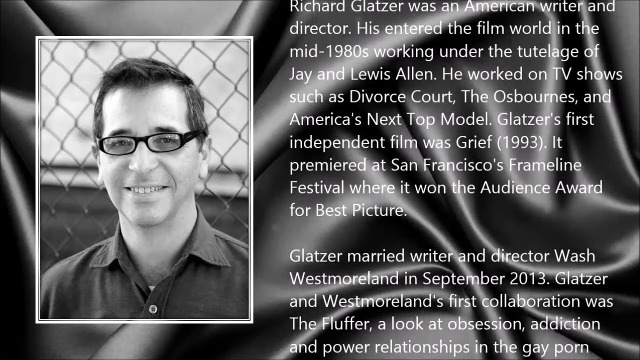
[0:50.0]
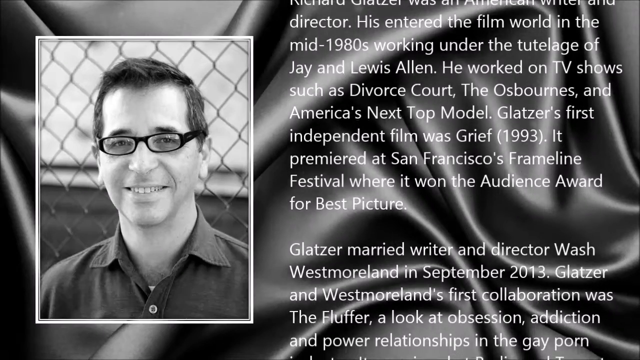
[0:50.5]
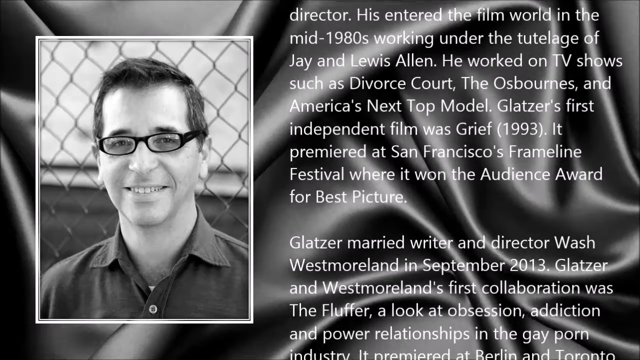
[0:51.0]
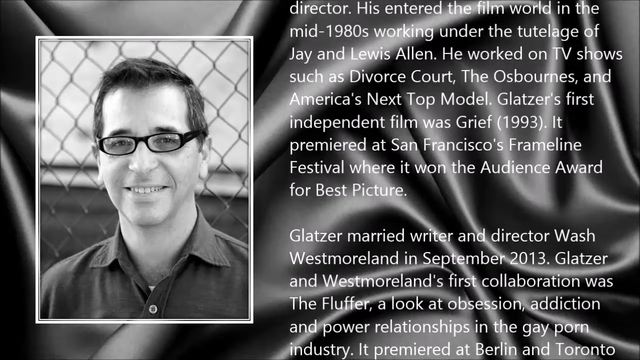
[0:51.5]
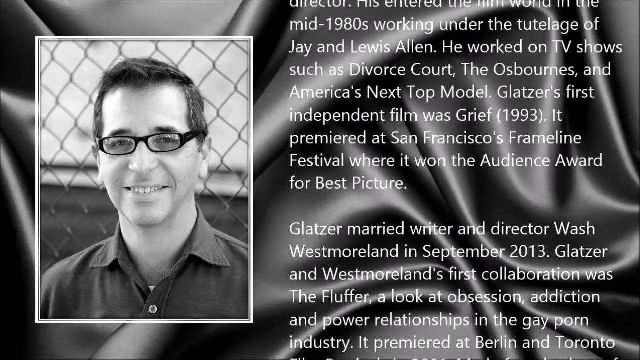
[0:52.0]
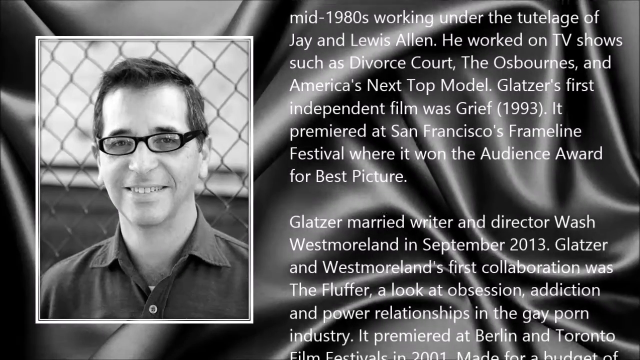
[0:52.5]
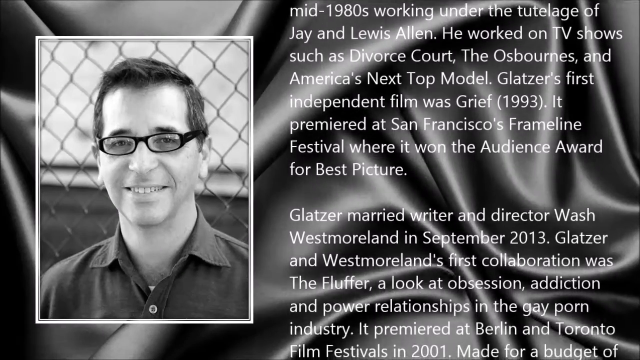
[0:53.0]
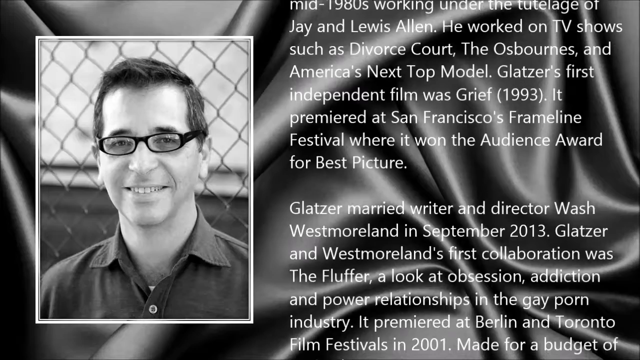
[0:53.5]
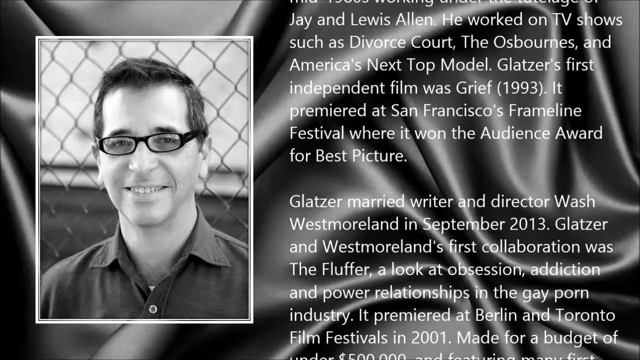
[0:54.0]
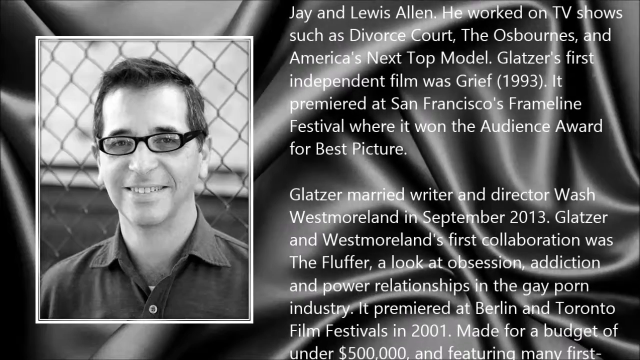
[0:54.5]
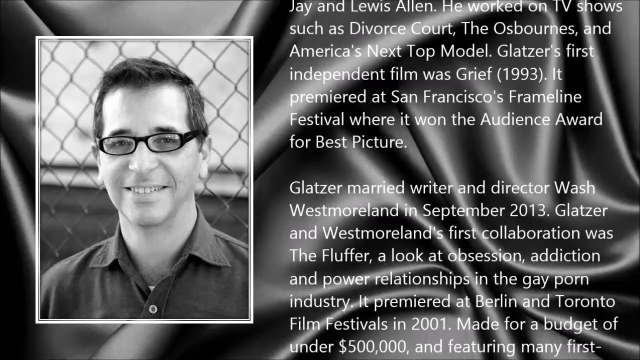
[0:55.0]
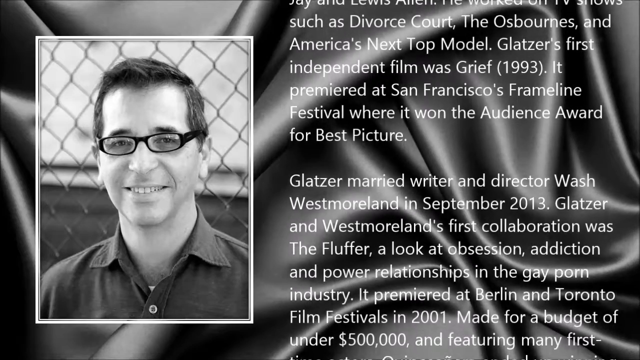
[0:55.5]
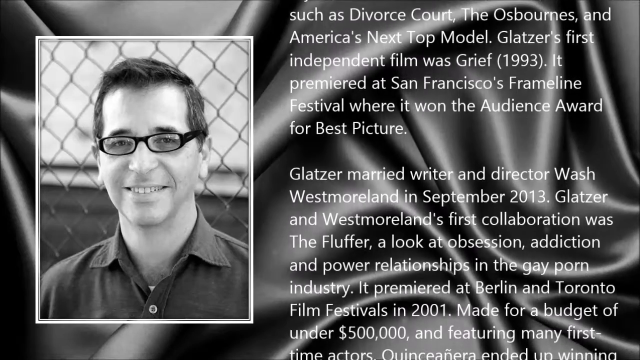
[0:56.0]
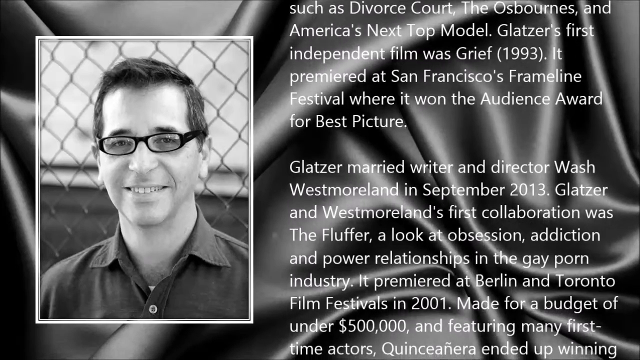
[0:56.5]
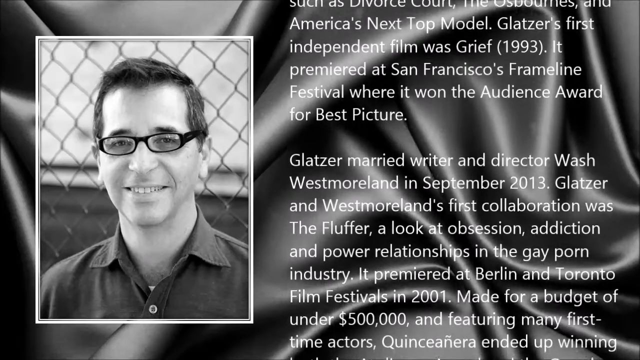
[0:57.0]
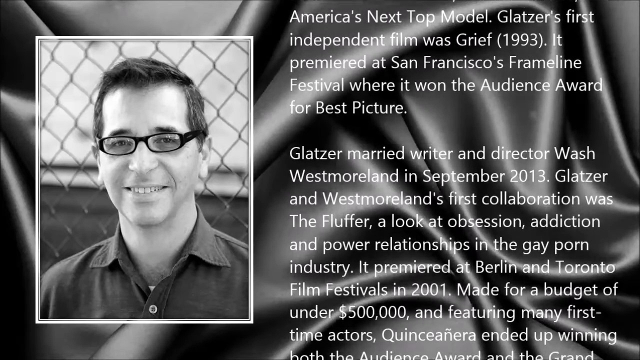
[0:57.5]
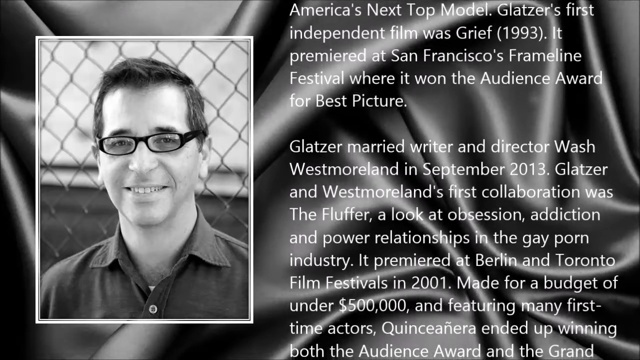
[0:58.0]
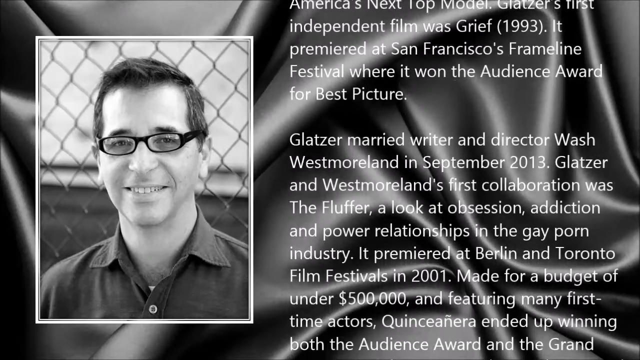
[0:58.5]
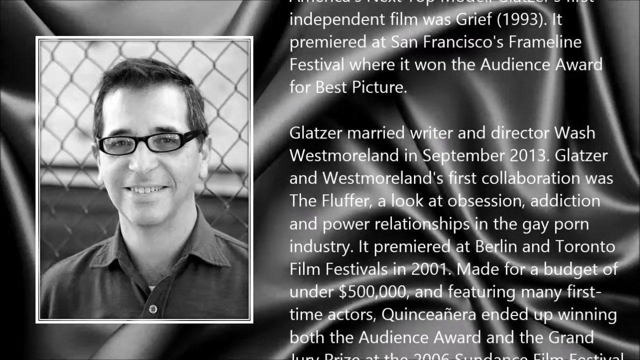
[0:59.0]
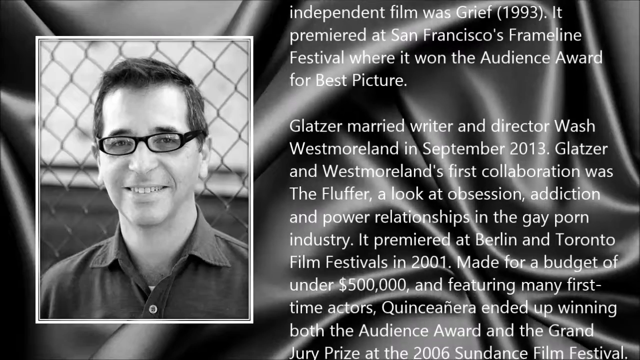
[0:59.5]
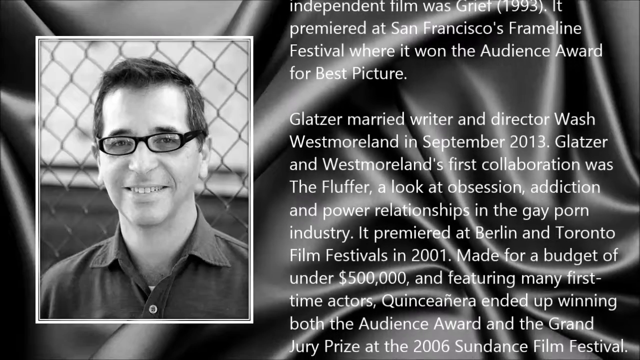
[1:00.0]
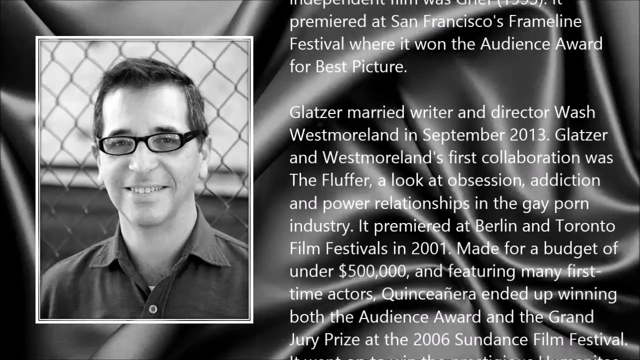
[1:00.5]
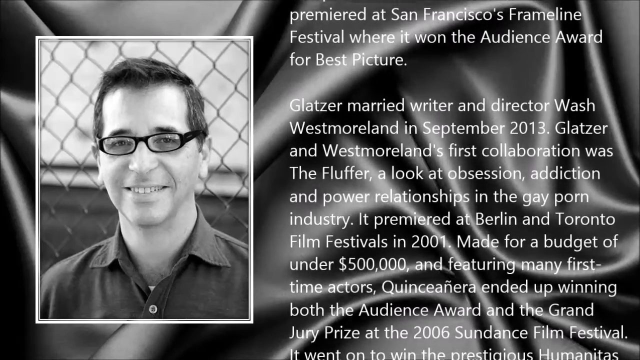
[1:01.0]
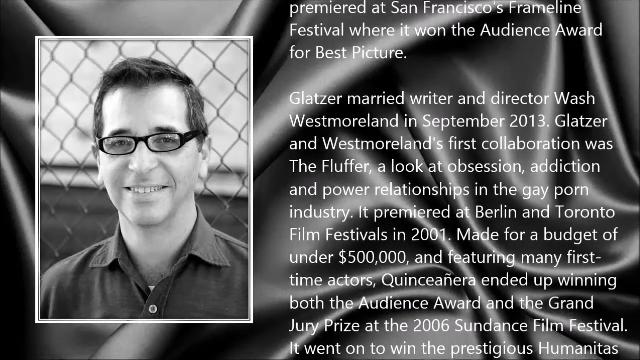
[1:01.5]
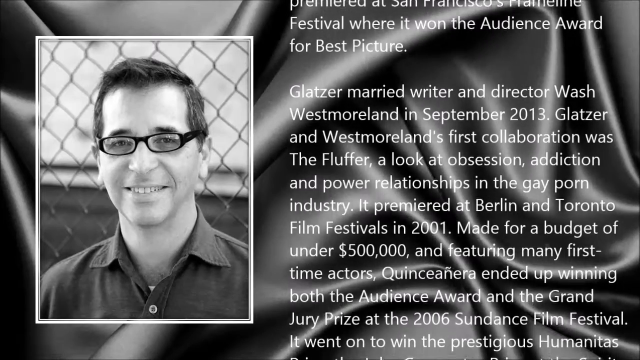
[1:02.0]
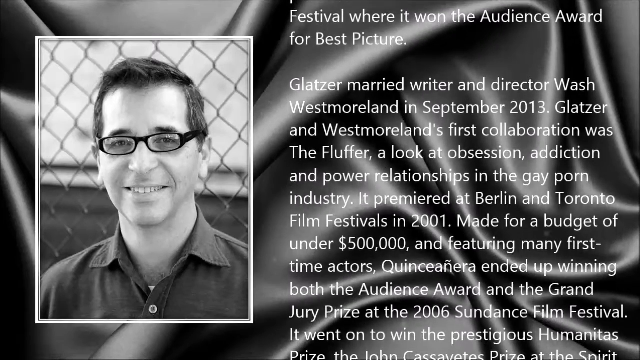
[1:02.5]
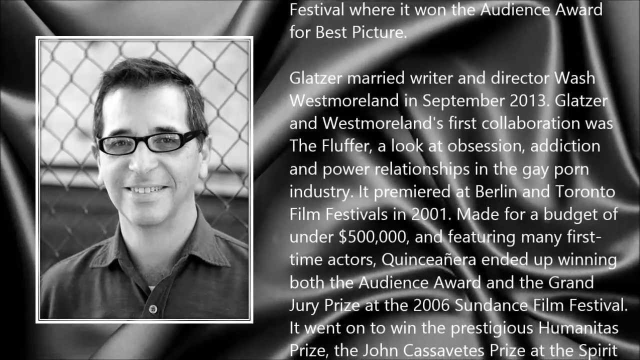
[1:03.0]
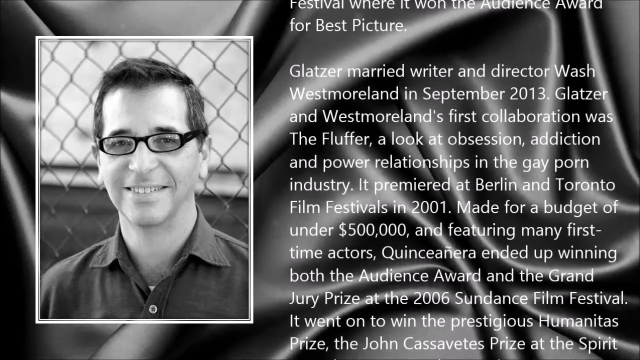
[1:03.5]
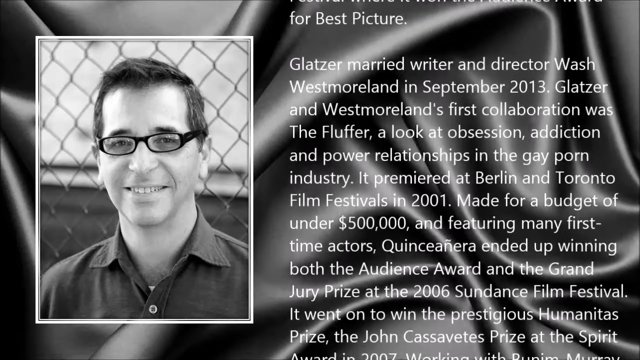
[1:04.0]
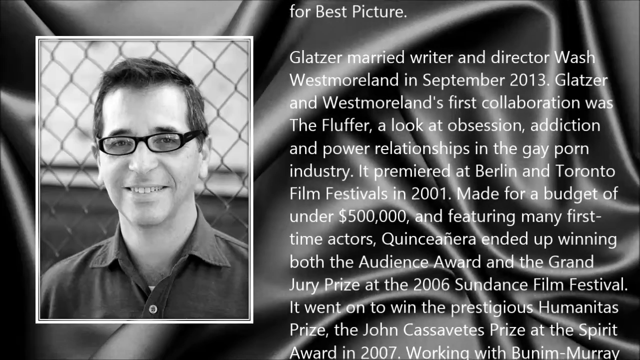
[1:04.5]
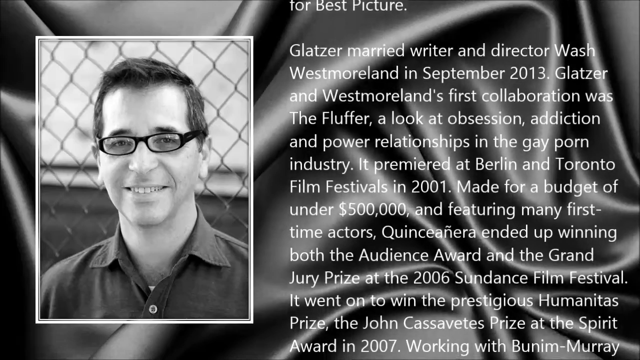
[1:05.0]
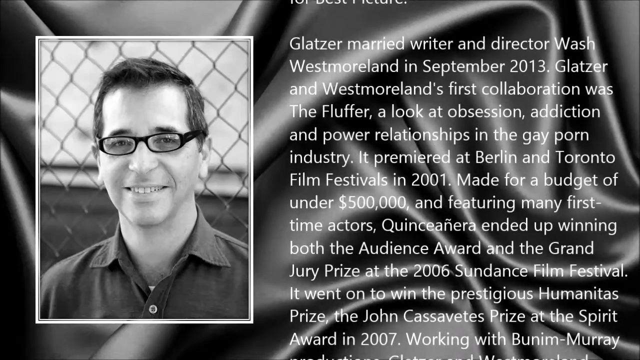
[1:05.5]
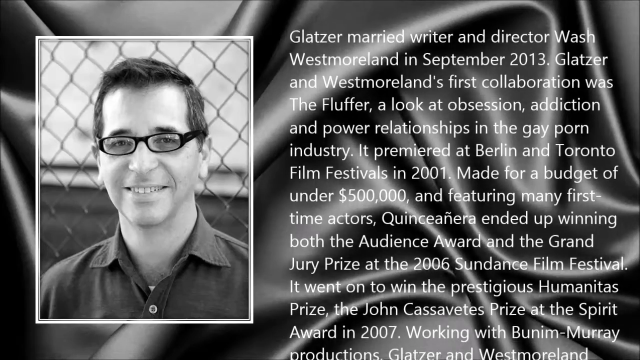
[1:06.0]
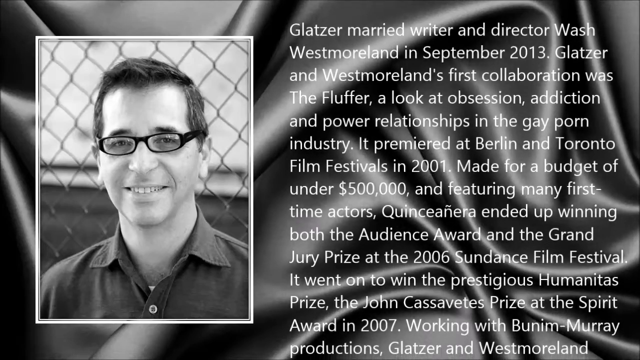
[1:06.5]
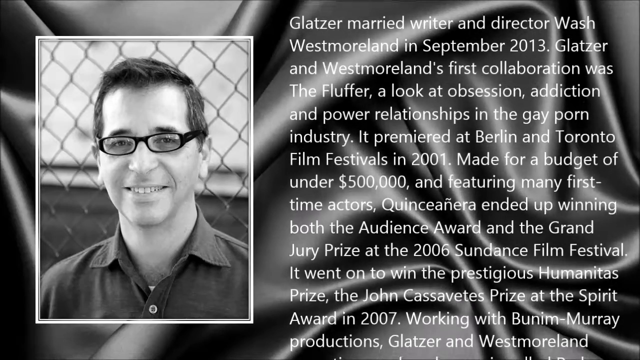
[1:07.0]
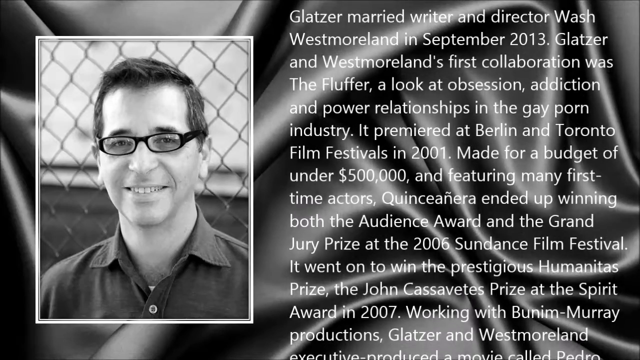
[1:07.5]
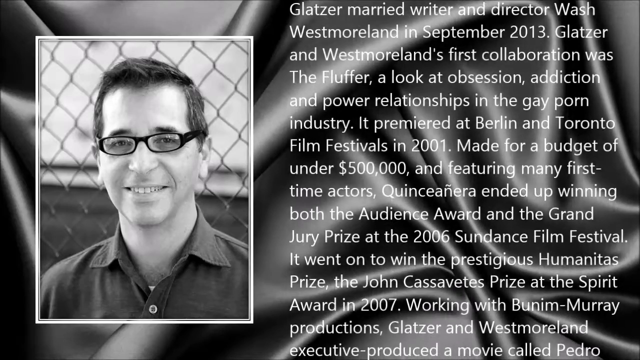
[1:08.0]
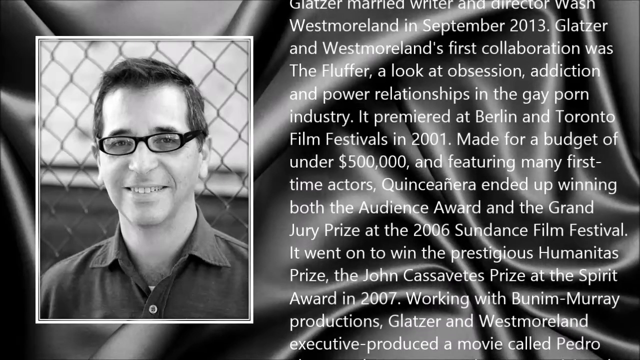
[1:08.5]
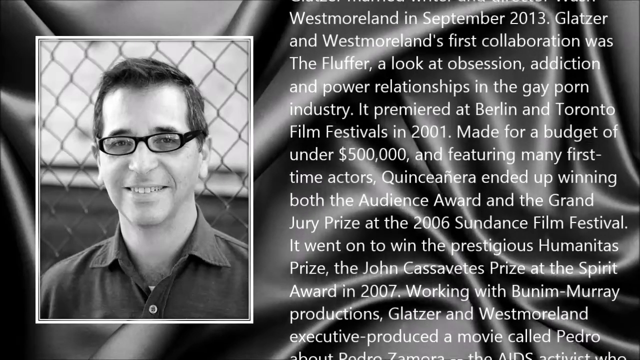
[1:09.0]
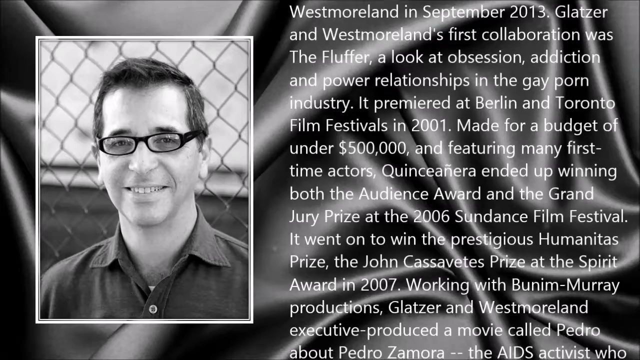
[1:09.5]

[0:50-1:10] A black-and-white picture shows a man with plastic rectangular black-rimmed glasses, a short haircut and a colored dress shirt, smiling nicely in front of a chain-link fence. To the right of him, text scrolls up. The video is in memory of this man, Richard Glatzer. The text continues: "Glatzer married writer and director Wash Westmoreland in September 2013. Glatzer and Westmoreland's first collaboration was The Fluffer, a look at obsession, addiction, and power relationships in the gay porn industry. It premiered at Berlin and Toronto Film Festivals in 2001. Made for a budget of under $500,000 and featuring many first-time actors, Quinceañera ended up winning both the Audience Award and the Grand Jury Prize at the 2006 Sundance Film Festival. It went on to win the prestigious Humanitas Prize, the John Cassavetes Prize at the Spirit Award in 2007."